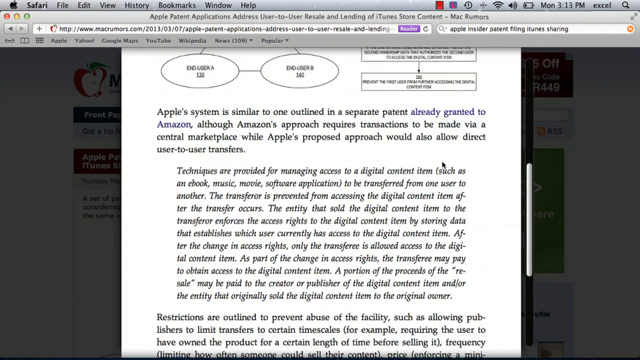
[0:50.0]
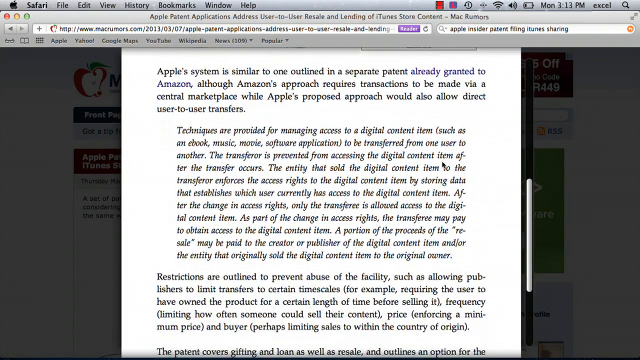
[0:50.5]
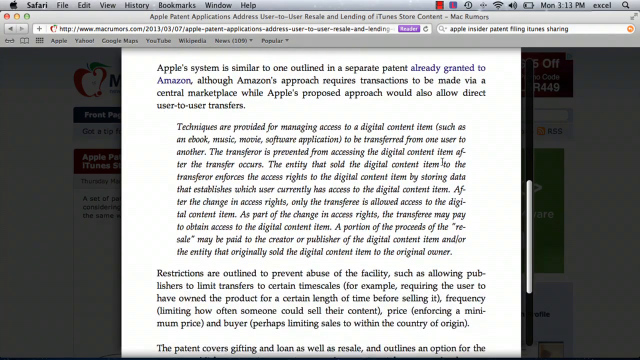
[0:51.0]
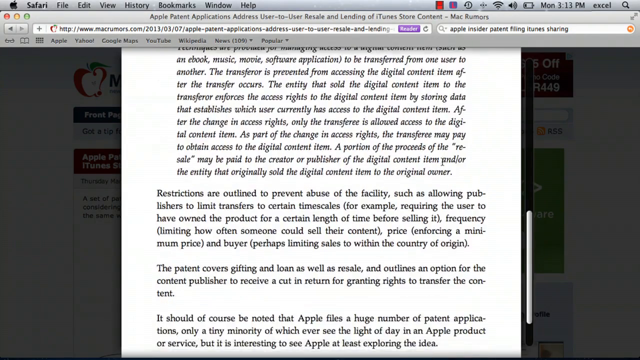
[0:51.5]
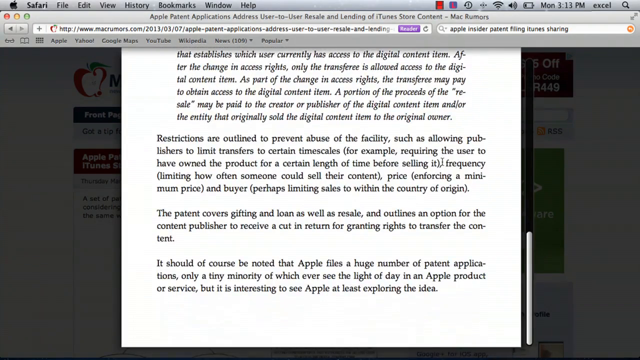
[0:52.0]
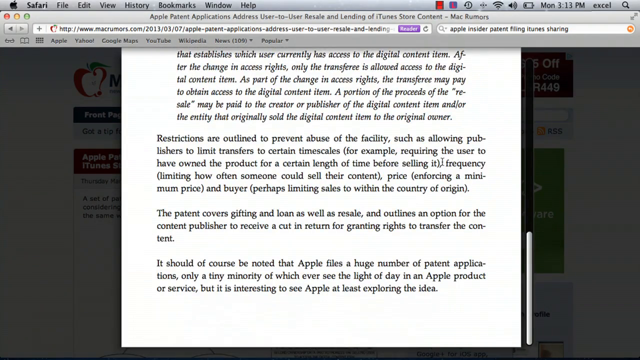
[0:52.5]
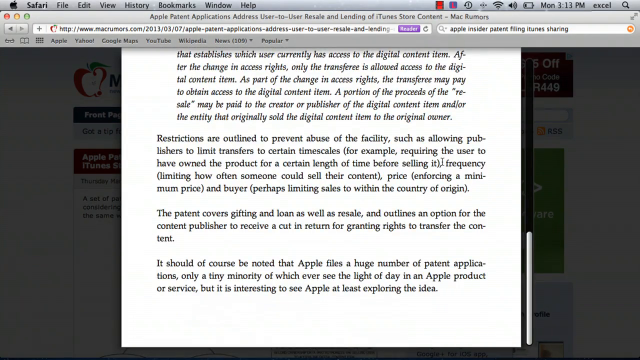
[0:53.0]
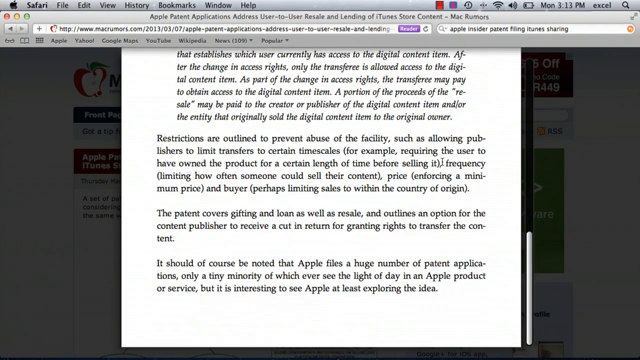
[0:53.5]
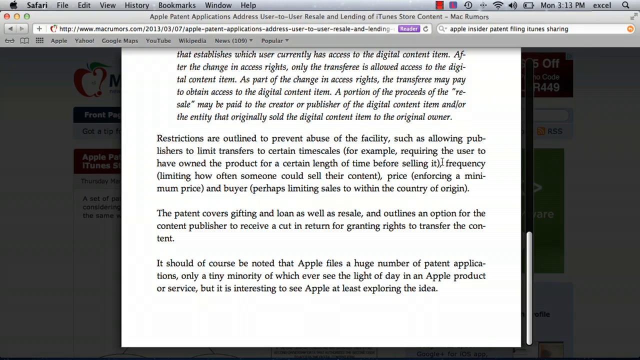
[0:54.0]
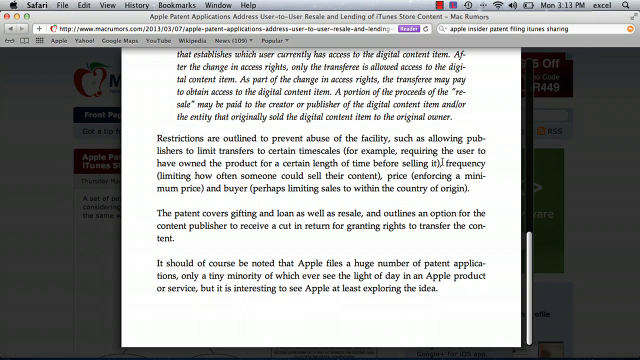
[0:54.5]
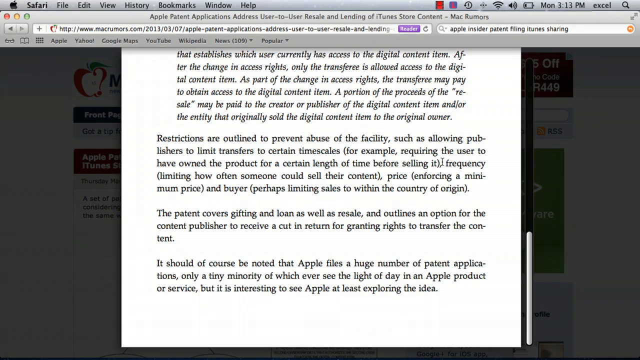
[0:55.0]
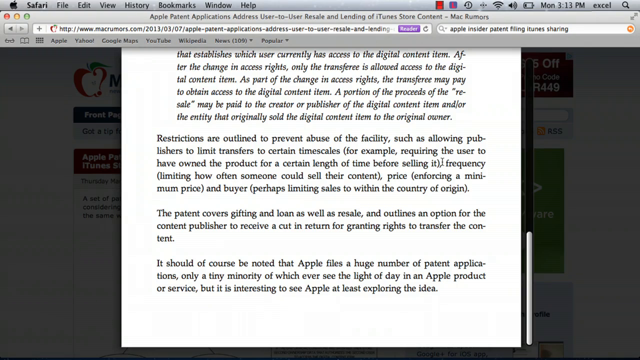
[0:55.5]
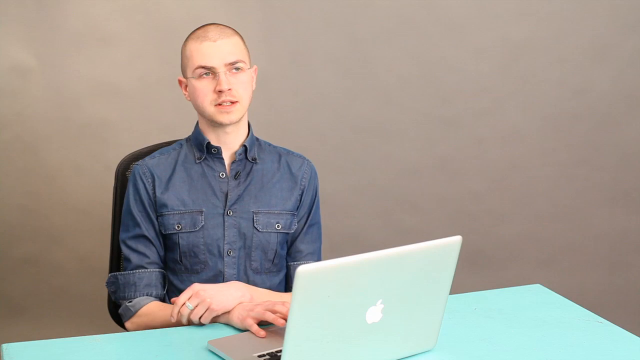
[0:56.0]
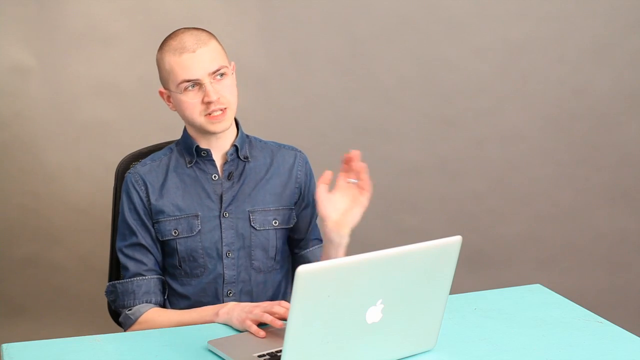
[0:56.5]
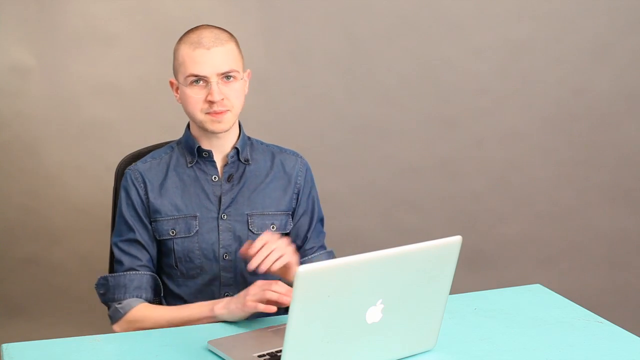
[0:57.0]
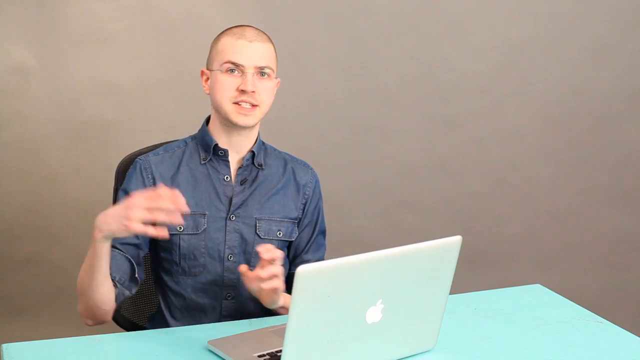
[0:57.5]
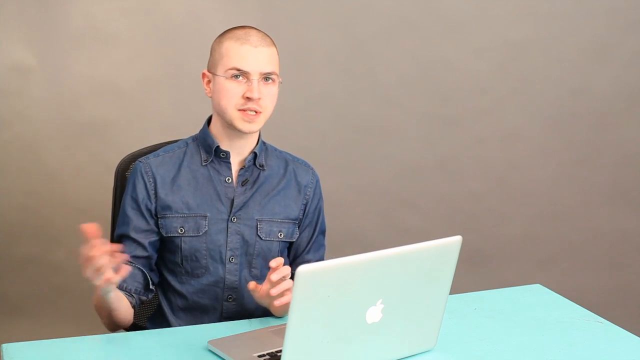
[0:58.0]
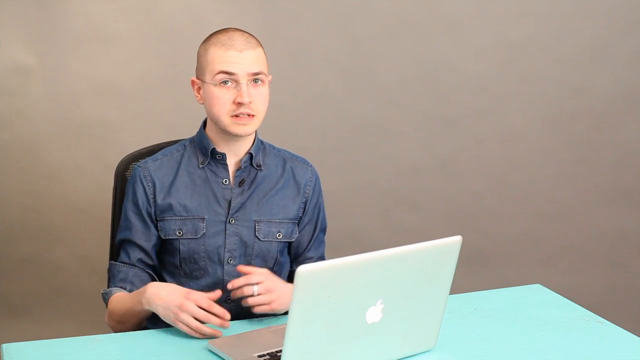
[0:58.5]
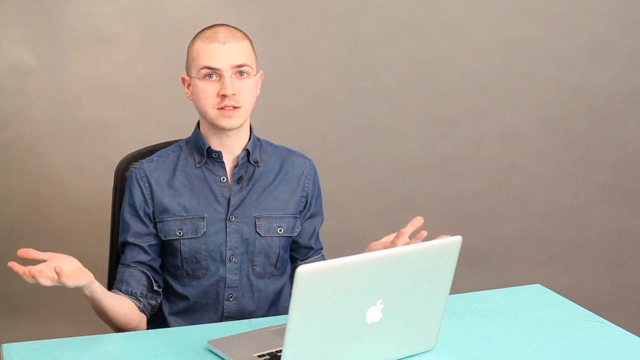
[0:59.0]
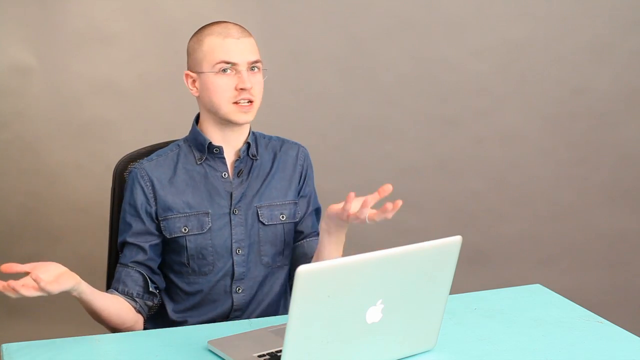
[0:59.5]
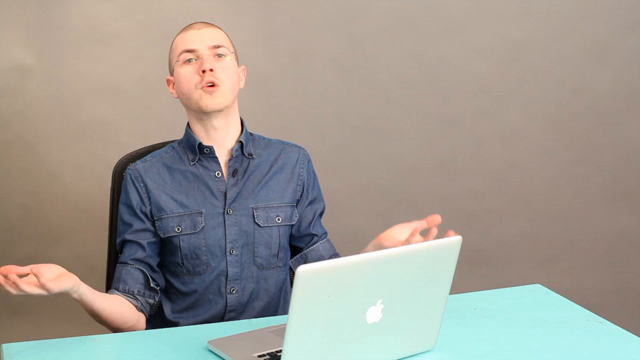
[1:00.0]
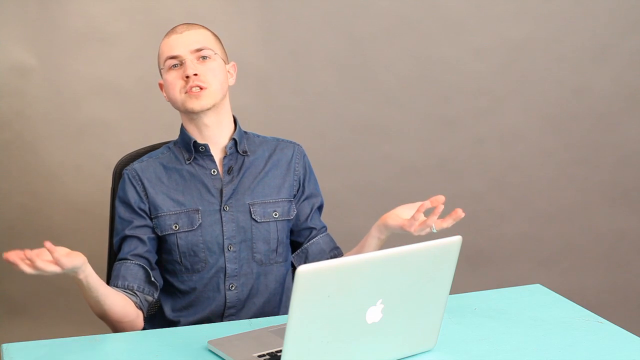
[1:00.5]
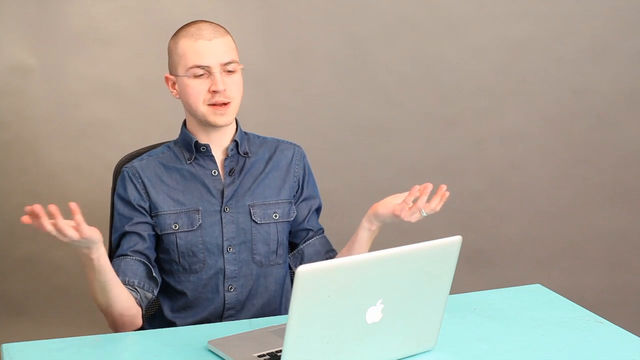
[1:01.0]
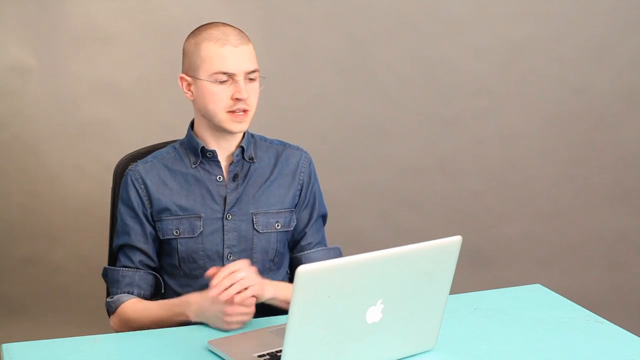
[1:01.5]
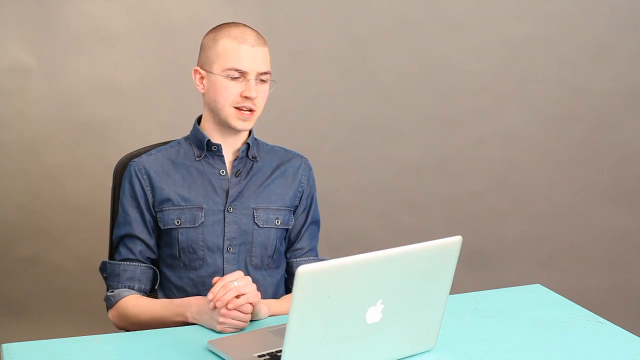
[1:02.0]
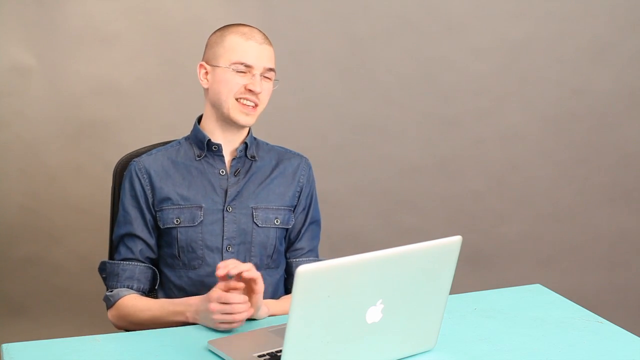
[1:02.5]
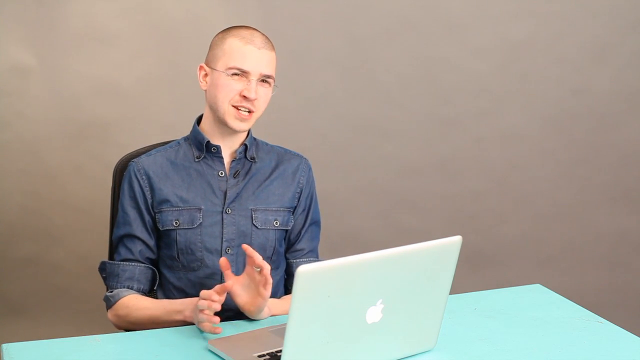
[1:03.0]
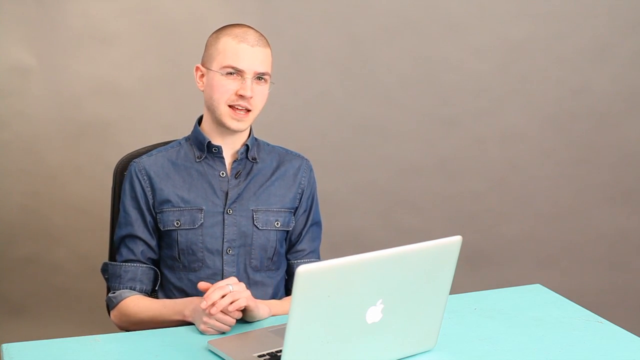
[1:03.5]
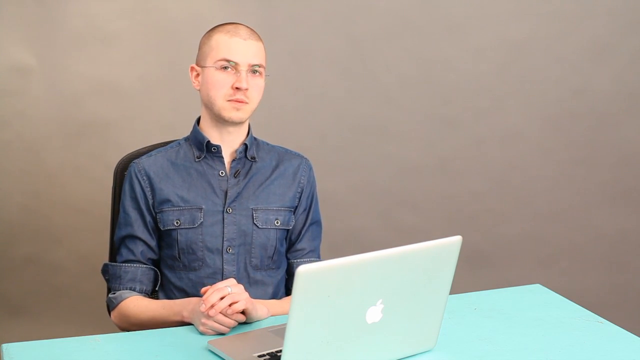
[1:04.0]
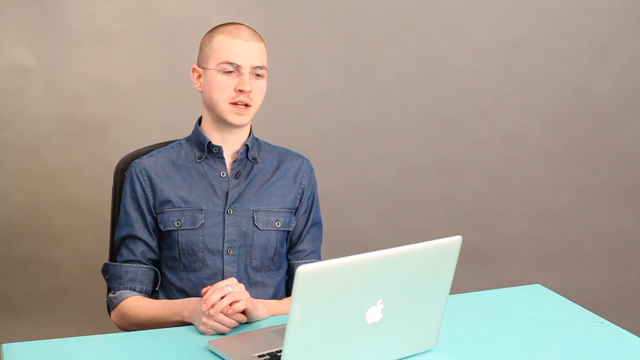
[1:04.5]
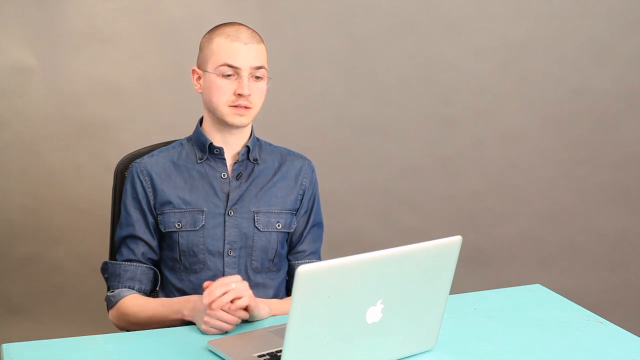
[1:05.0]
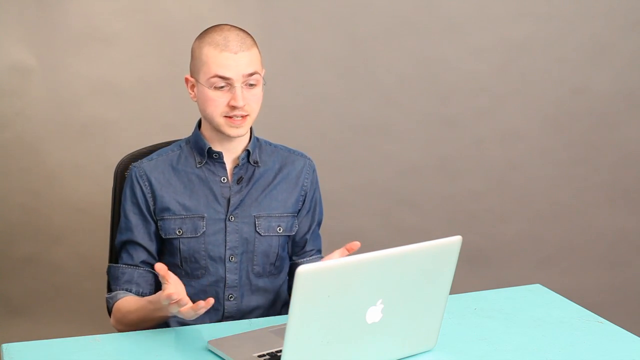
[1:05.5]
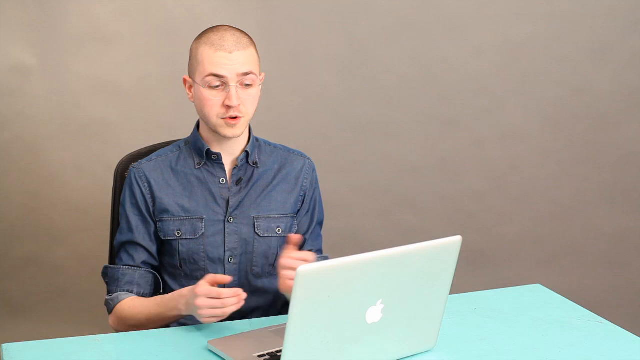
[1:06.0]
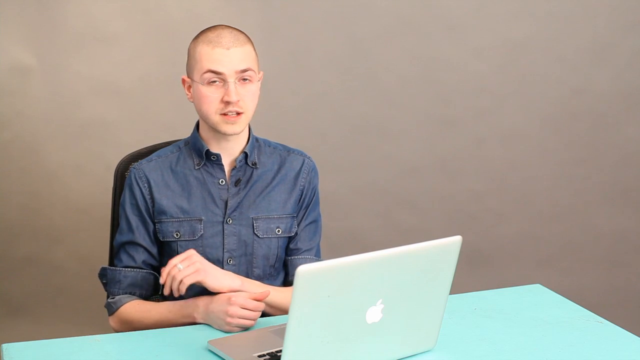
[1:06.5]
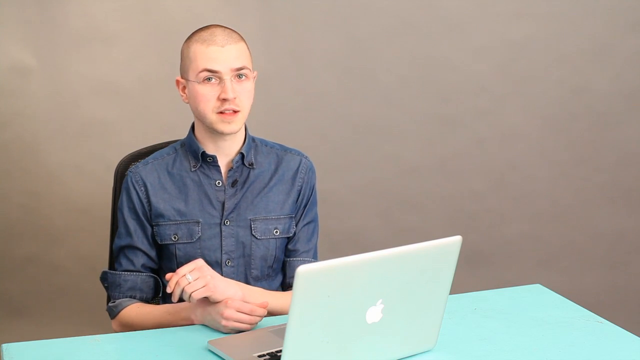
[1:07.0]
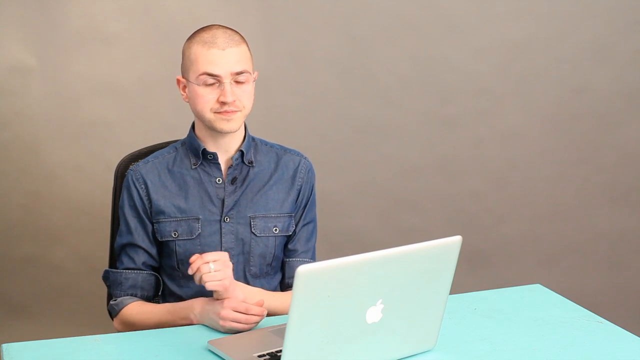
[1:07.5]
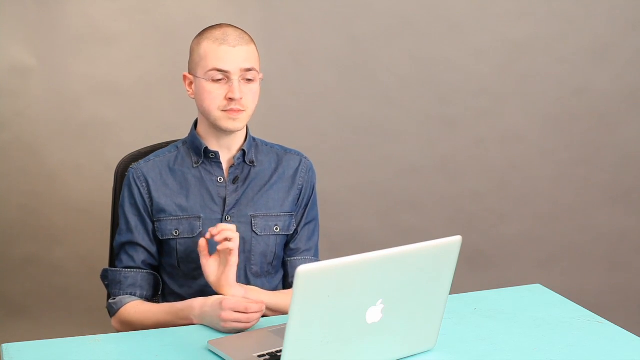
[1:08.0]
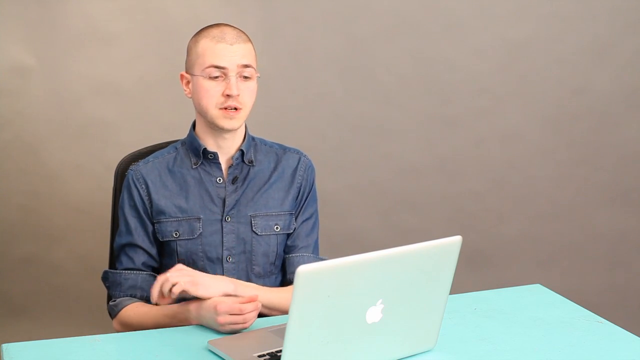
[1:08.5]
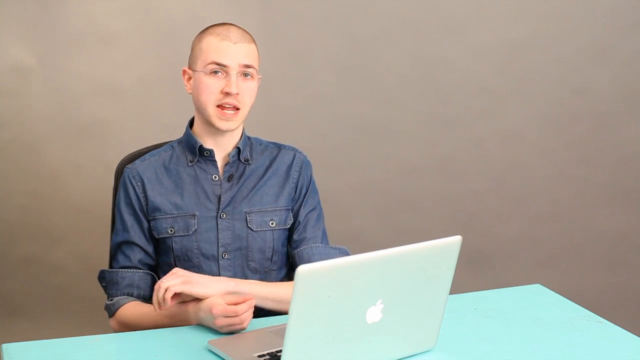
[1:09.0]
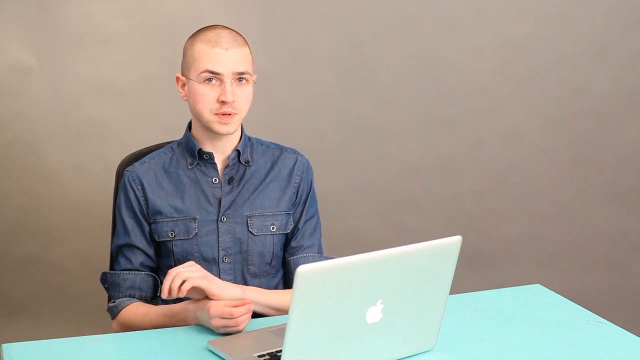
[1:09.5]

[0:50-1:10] A kind of diagram with several bubbles is shown, and the page scrolls down to more text. The video then returns to Skyler Kelly, who makes hand gestures while wearing his denim shirt and glasses, with a Macintosh in front of him, a kind of gray background, and a light blue desk that his laptop is sitting on. He continues to look at his laptop and talk, apparently about the webpage or the video he is making. The setting switches between the screen with text and a few visuals and the office or space where Skyler Kelly is recording the video.